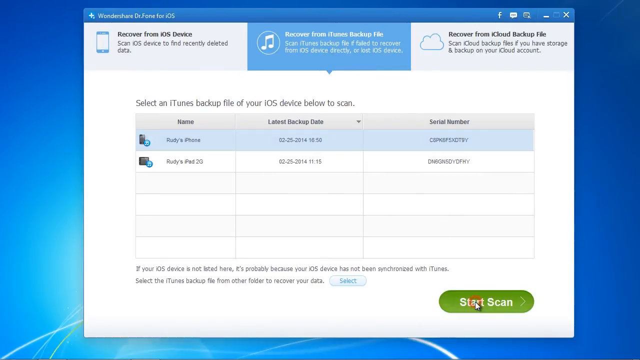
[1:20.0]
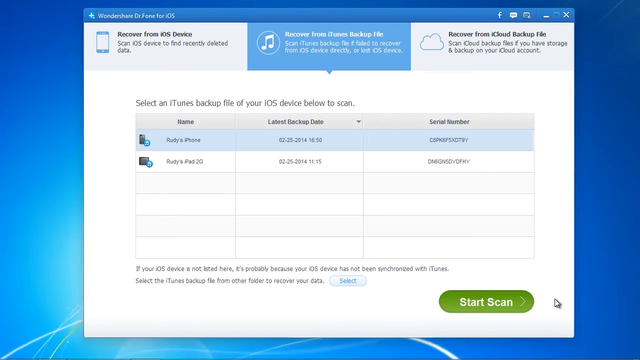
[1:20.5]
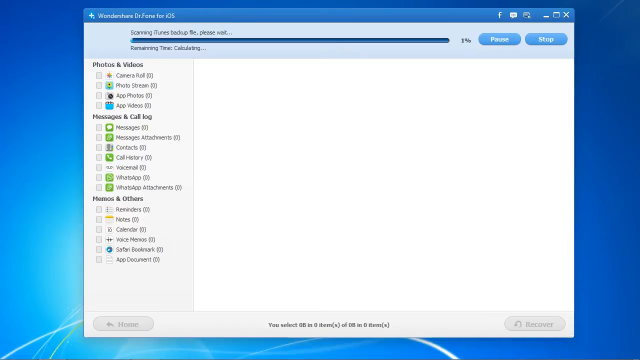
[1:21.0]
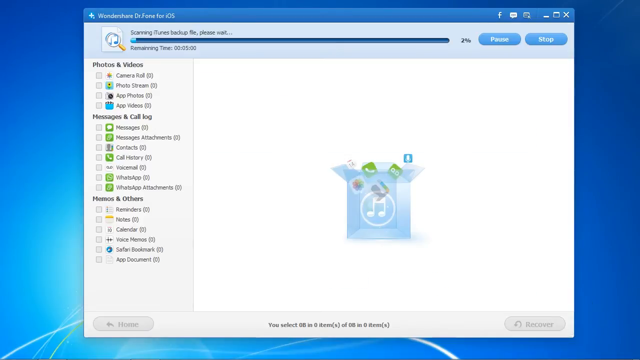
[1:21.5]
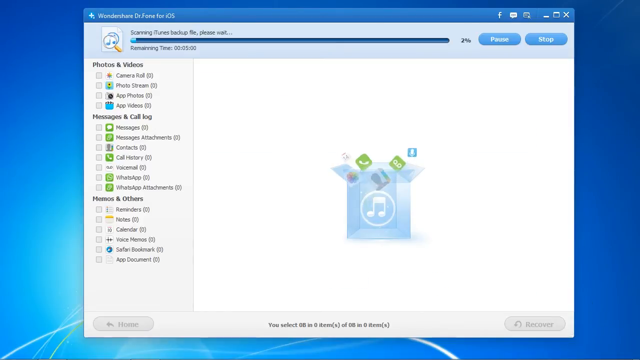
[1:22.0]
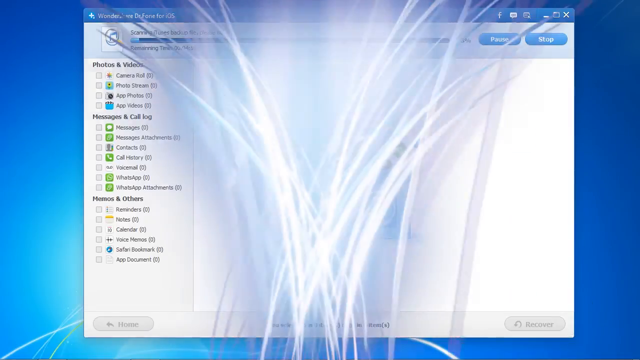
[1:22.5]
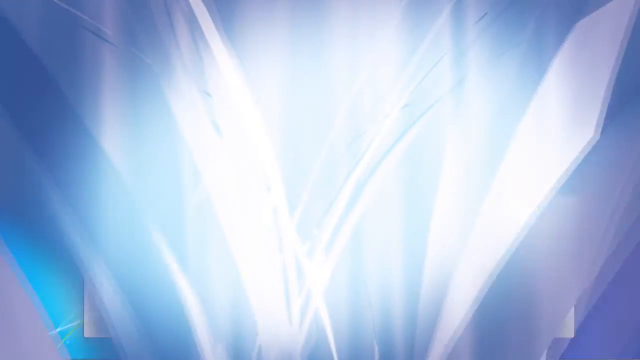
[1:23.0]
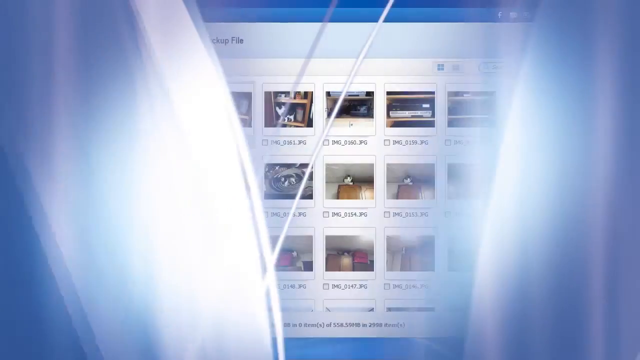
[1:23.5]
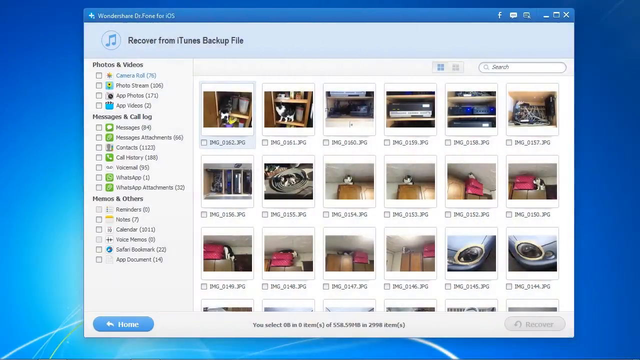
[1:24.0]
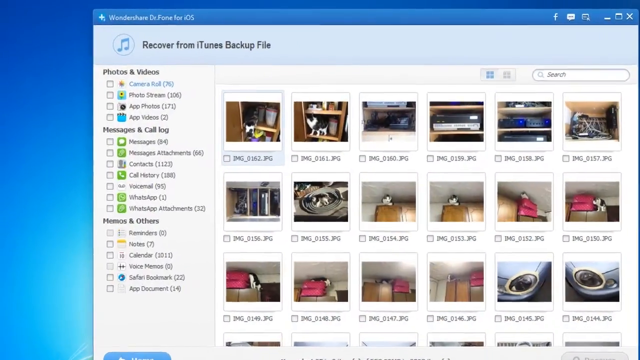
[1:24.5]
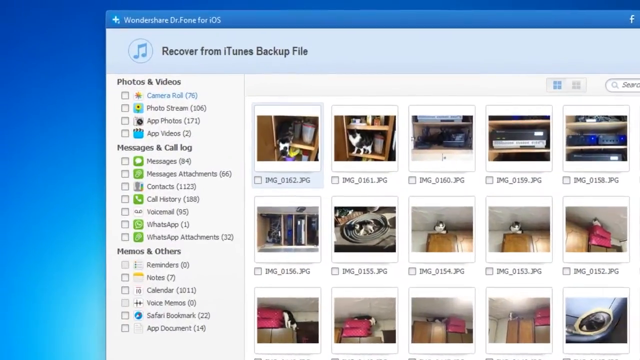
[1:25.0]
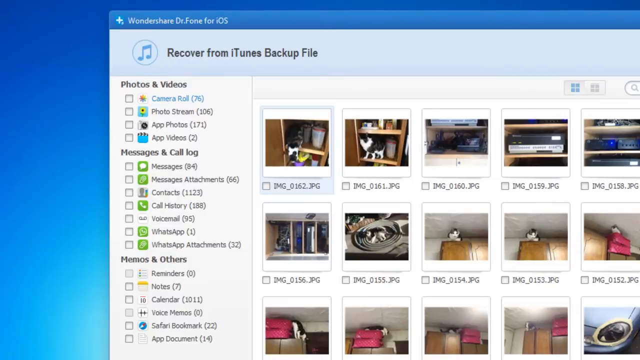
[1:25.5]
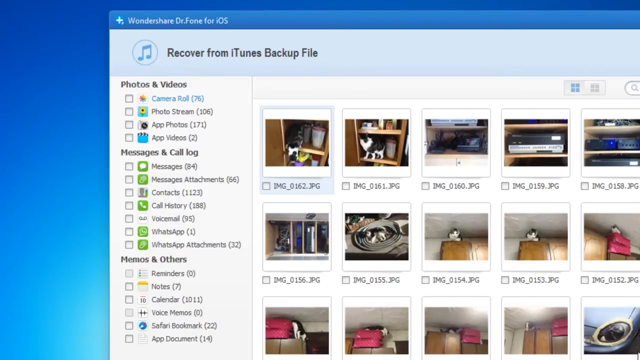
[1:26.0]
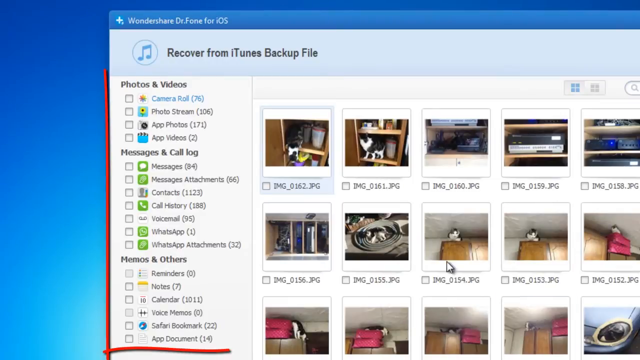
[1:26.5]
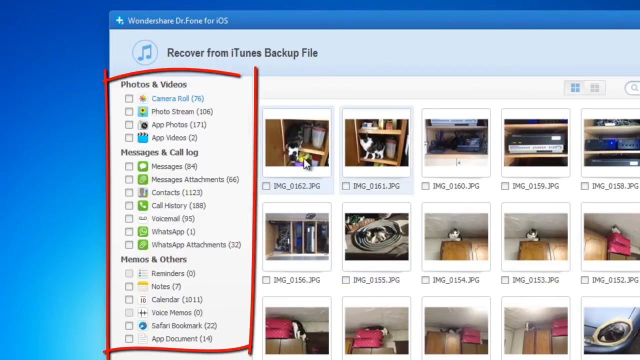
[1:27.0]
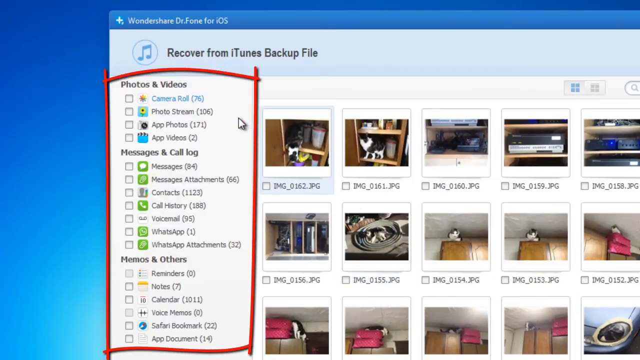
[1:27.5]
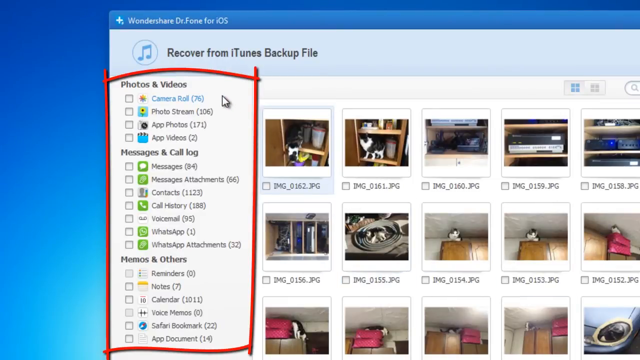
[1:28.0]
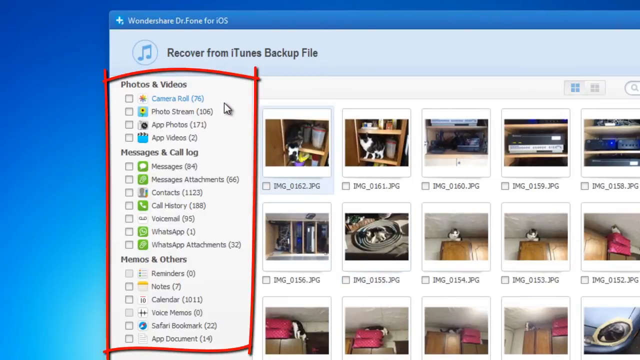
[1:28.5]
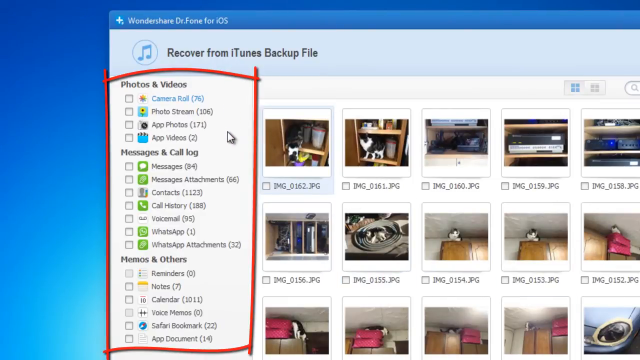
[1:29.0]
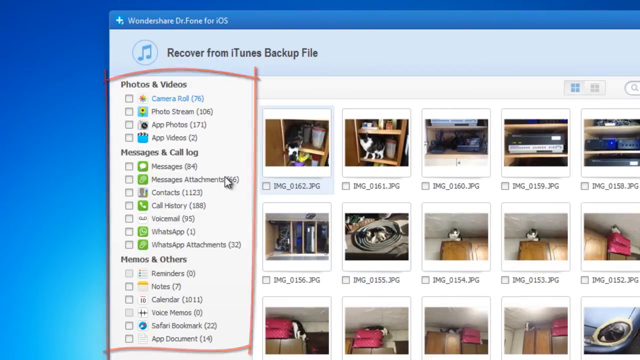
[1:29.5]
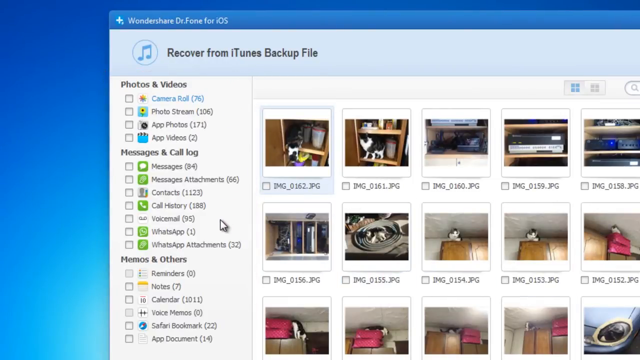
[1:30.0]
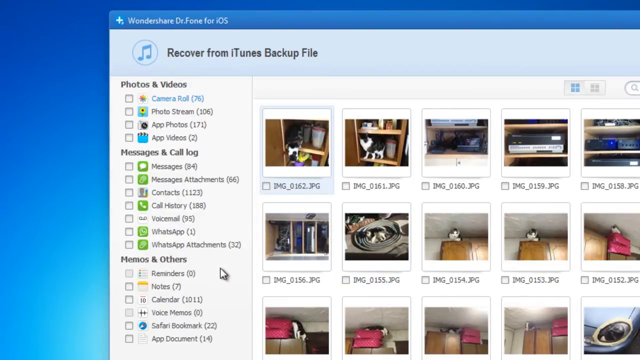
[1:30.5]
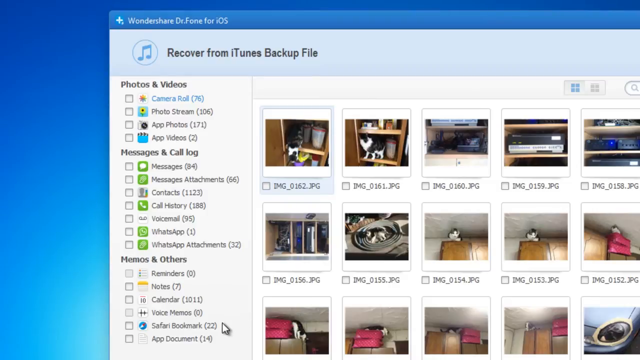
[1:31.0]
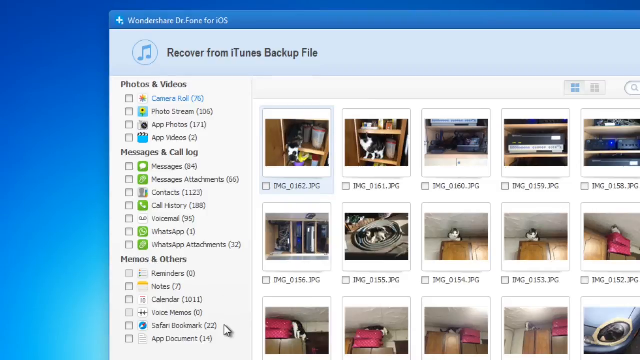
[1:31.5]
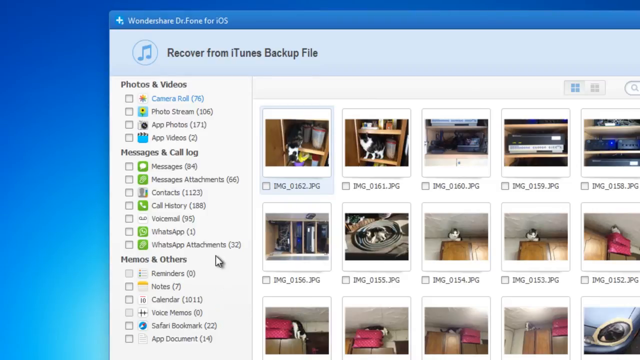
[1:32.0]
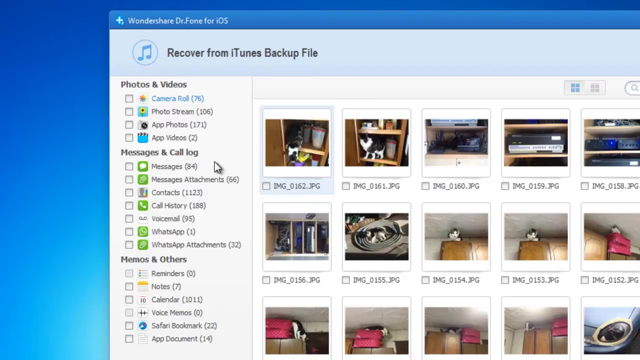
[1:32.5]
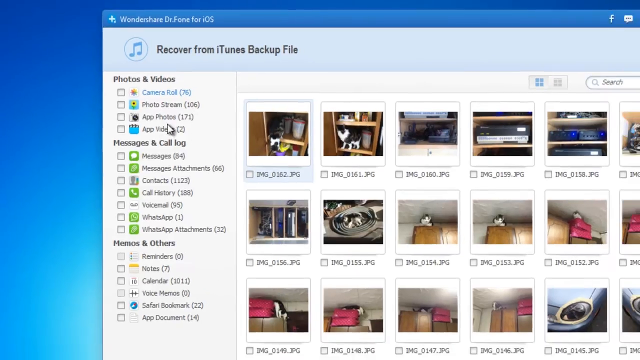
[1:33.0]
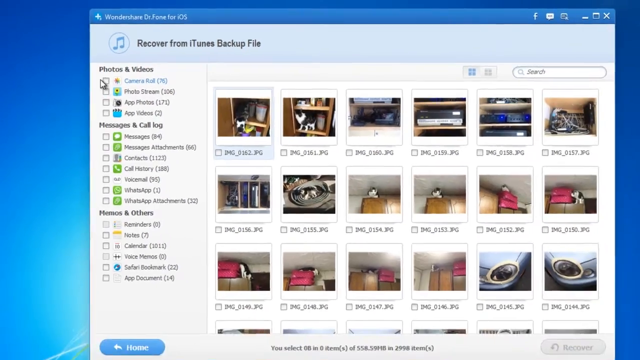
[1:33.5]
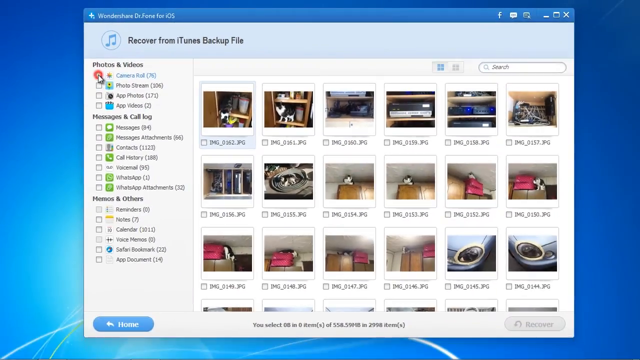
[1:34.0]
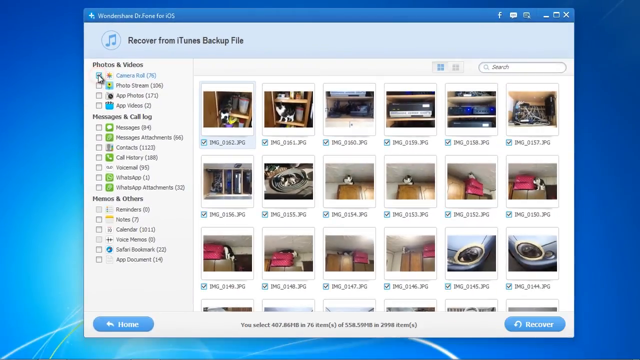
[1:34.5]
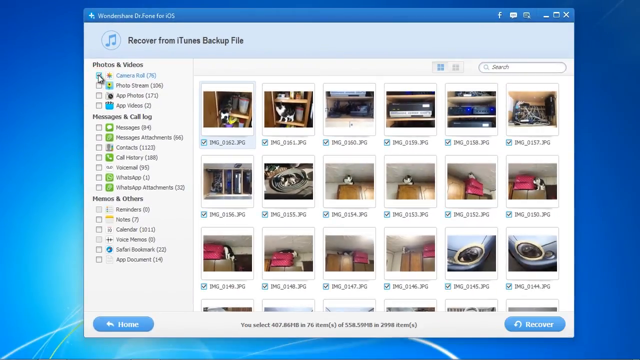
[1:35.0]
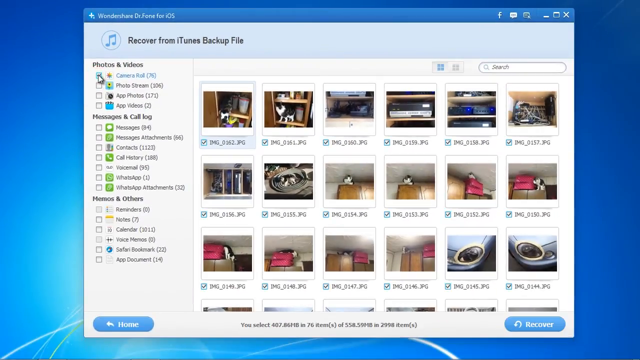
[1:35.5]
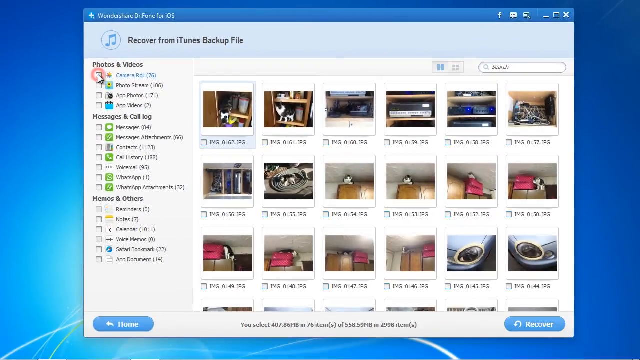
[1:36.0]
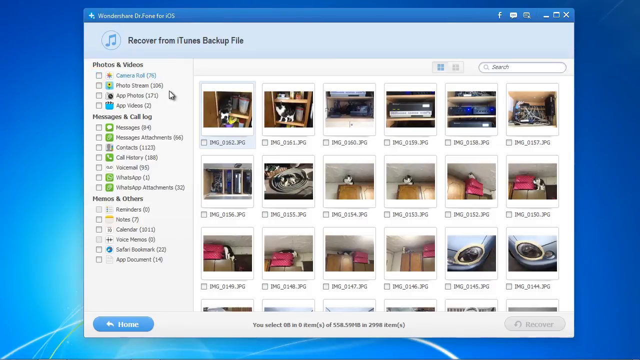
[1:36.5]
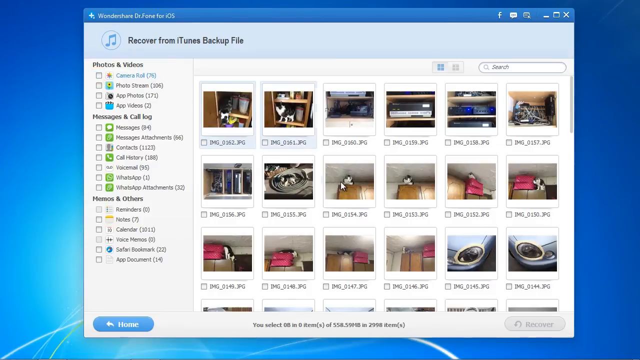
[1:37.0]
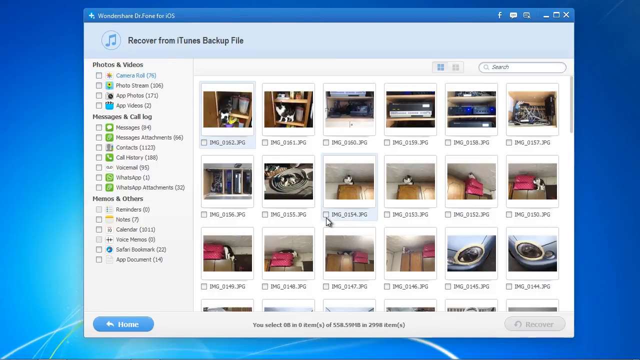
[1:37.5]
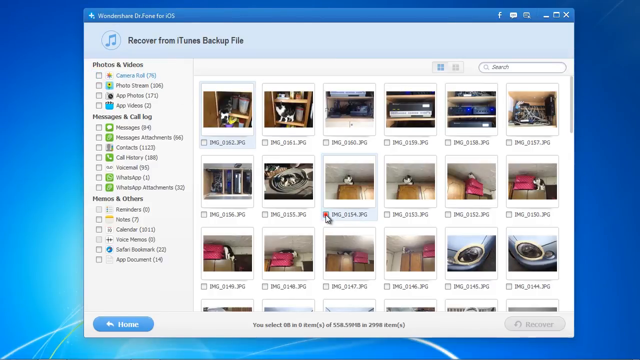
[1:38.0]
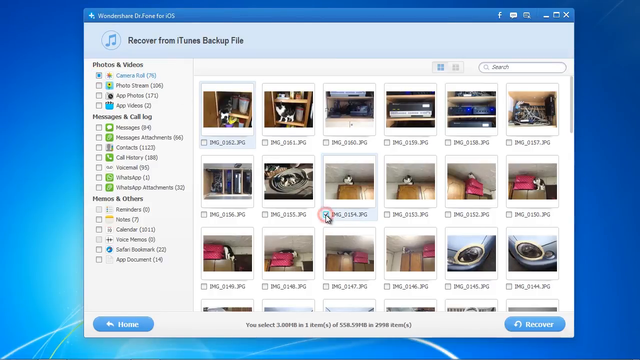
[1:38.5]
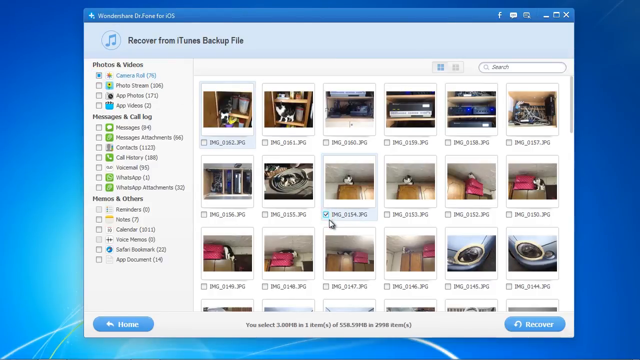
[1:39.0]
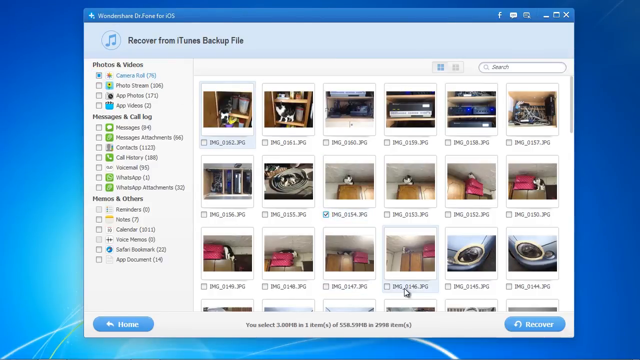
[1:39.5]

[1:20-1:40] The user apparently has connected a phone, an iPhone, and is trying to recover files from the iOS device. A chart-like screen appears, with text at the top reading "select an iTunes backup file of your iOS device below to scan." There are column headers for "name," "latest backup date," and "serial number." Under name there is apparently Rudy's iPhone or Rudy's iPad. The user appears to choose the Rudy's iPhone option and clicks scan. The screen transitions to one showing different media options, with many JPEGs. The sections for photos and videos, messages and call logs, memos, and others are outlined in red, seemingly highlighting the types of data that can be recovered.